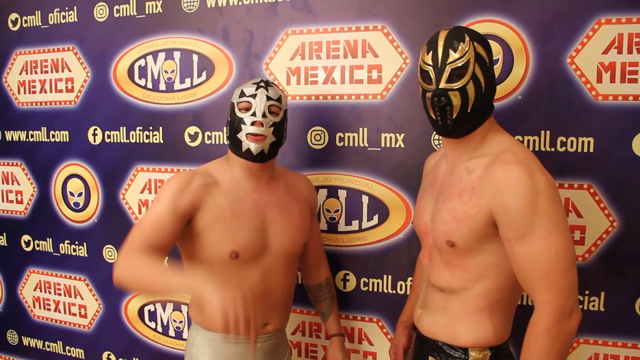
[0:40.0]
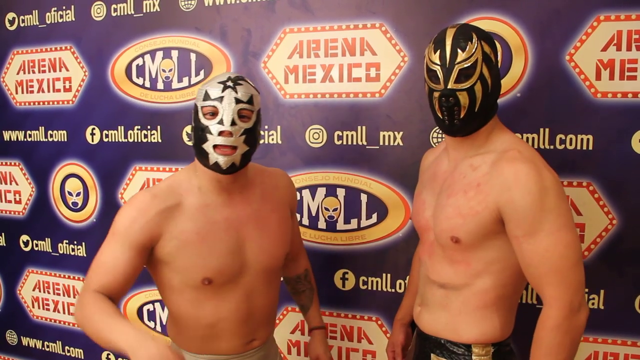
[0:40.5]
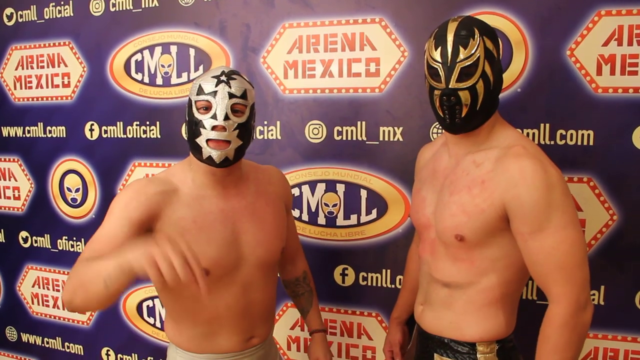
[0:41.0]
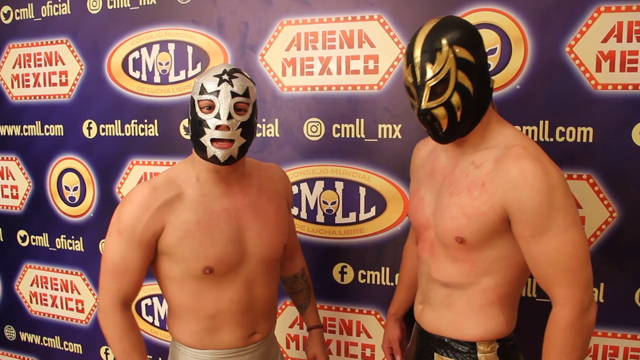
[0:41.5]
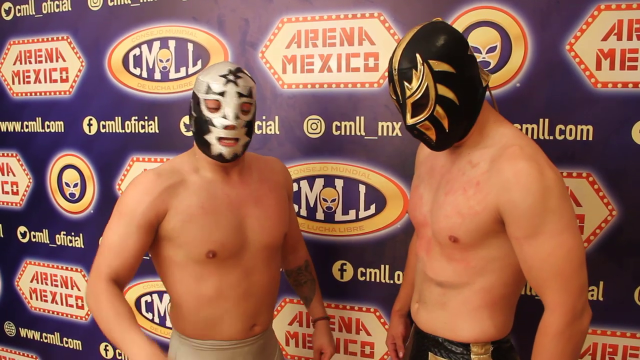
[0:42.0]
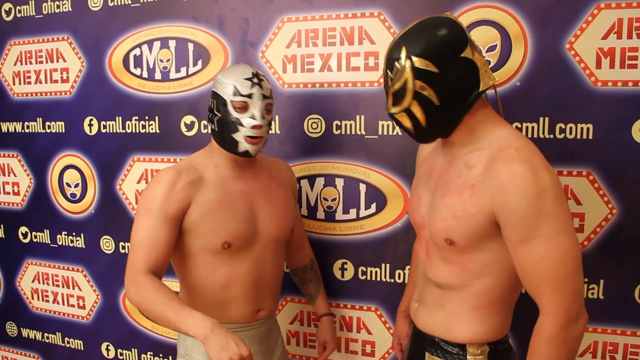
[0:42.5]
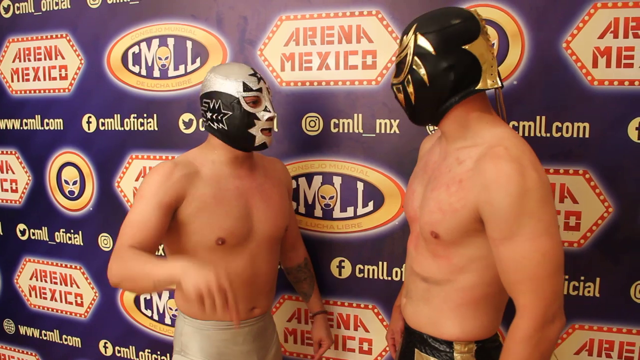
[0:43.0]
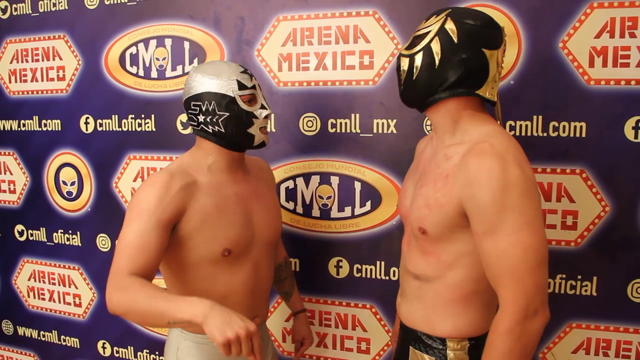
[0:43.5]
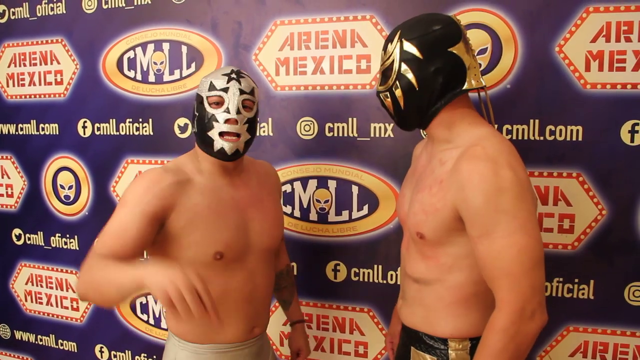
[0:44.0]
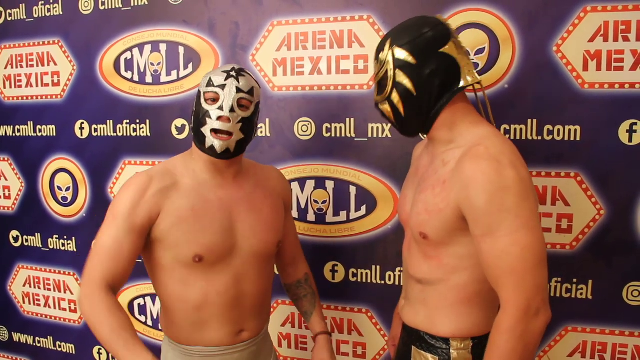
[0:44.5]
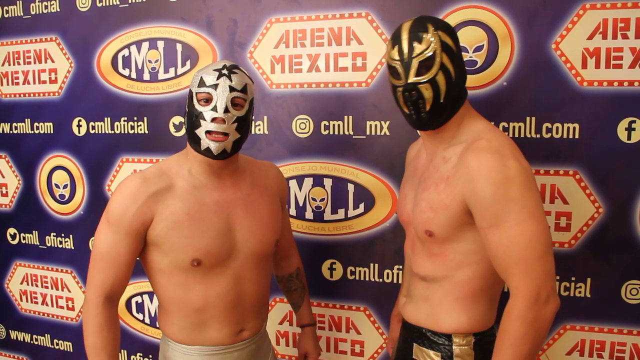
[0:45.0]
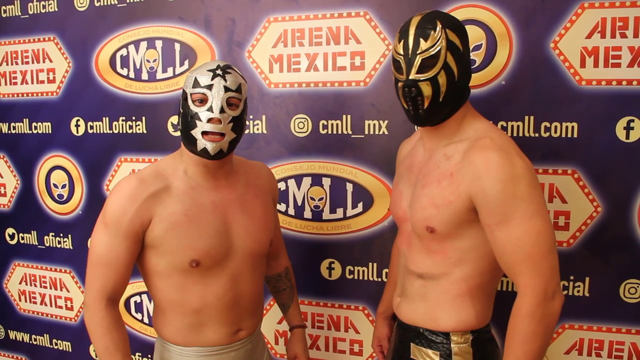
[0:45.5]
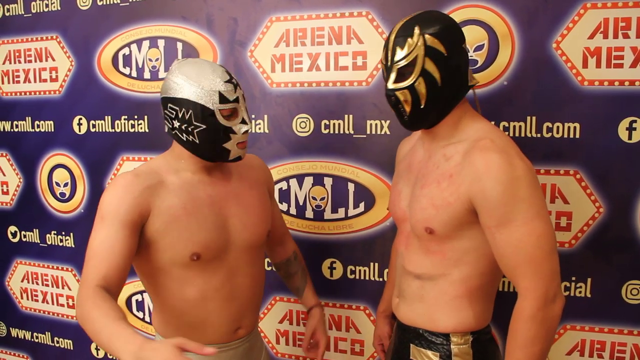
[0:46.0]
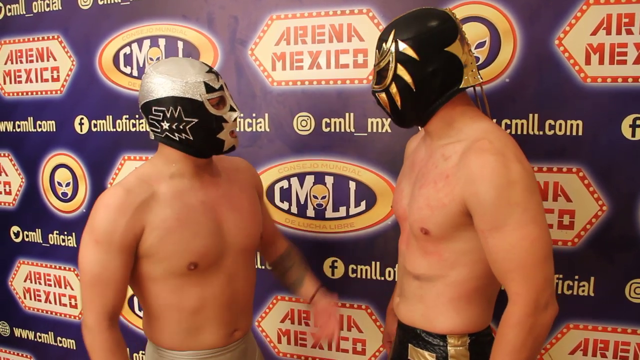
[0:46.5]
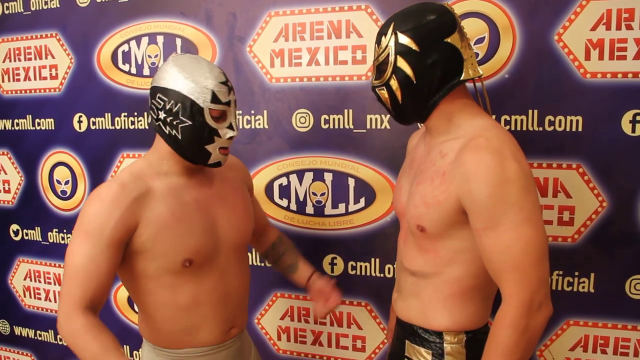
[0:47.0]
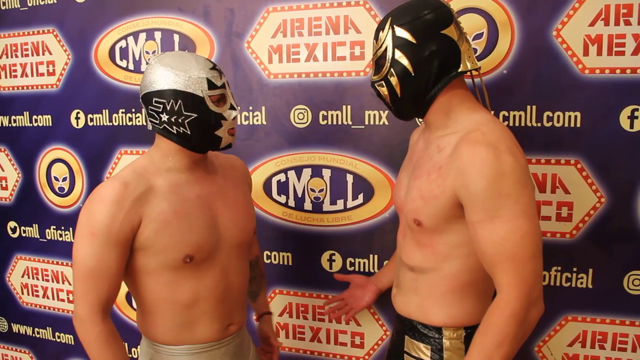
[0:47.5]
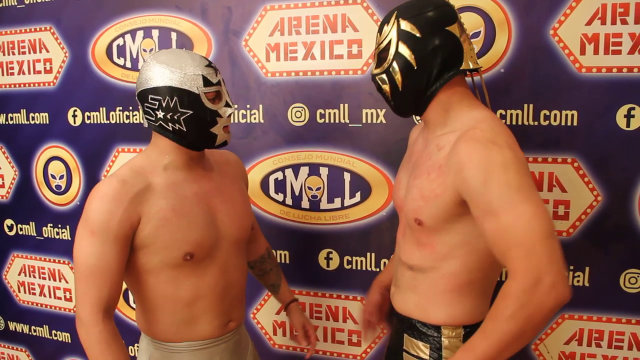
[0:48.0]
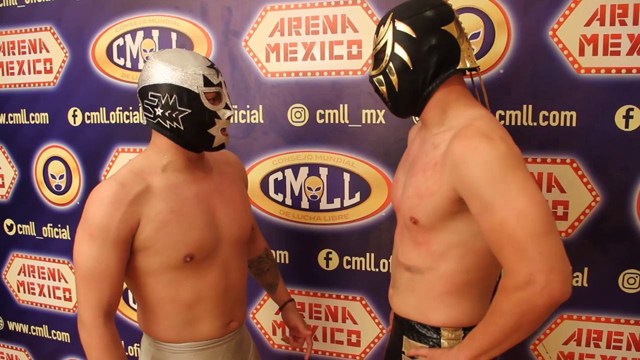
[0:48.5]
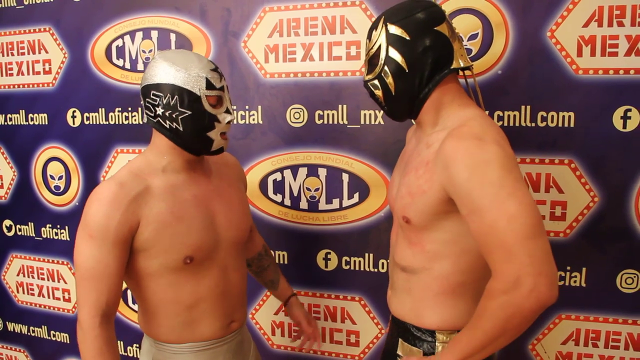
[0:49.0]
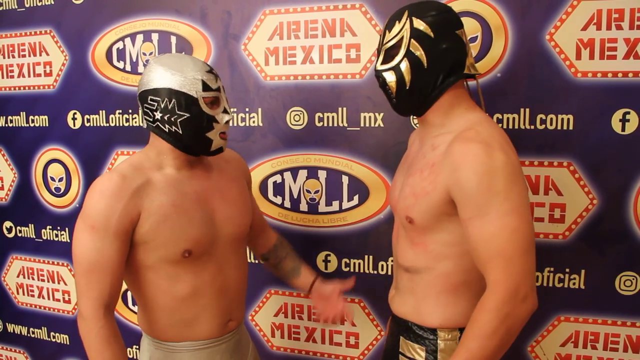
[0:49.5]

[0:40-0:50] The man in the white and black mask talks to the cameraperson, who is pointing the camera at the two men, apparently answering or being asked a question. Both men turn their heads and look toward the cameraperson, making hand gestures and pointing at the person holding the camera. The shirtless men then face each other and continue their conversation. The camera is steady and the scene does not change.